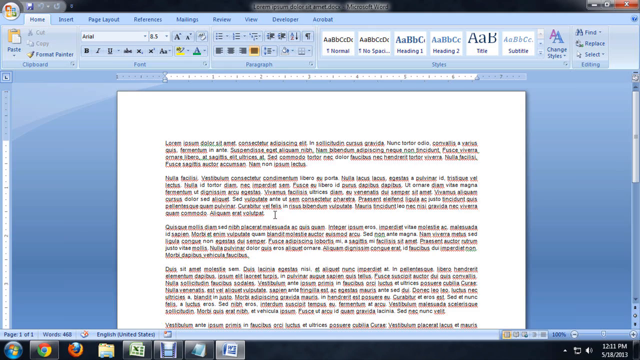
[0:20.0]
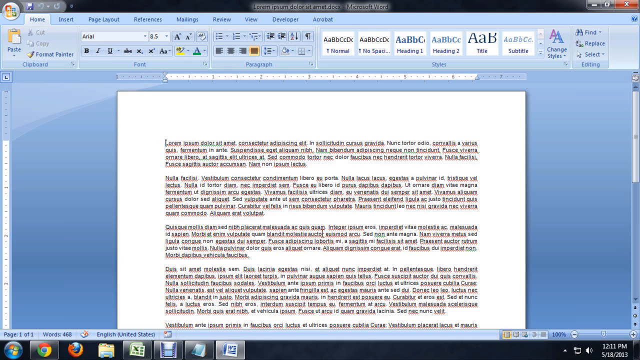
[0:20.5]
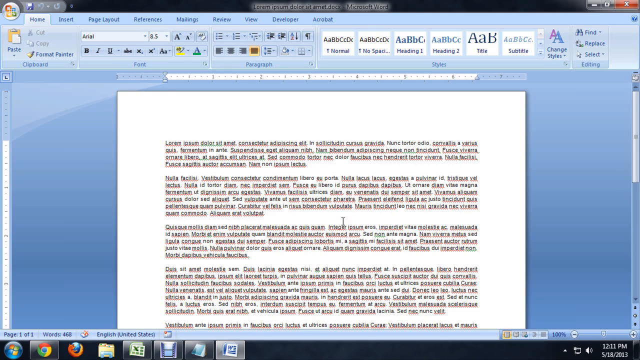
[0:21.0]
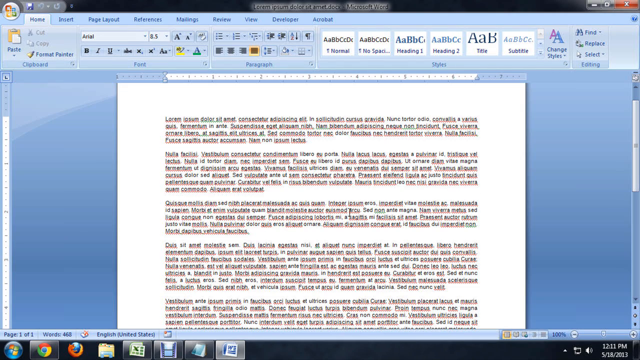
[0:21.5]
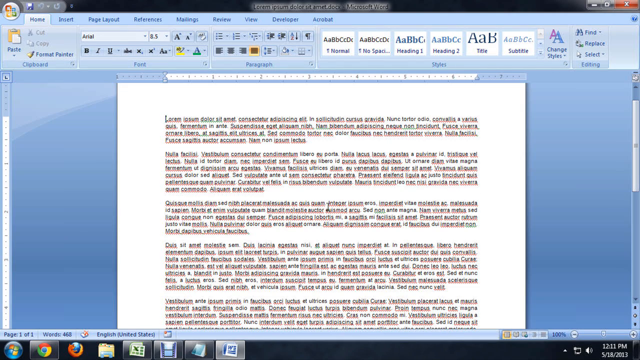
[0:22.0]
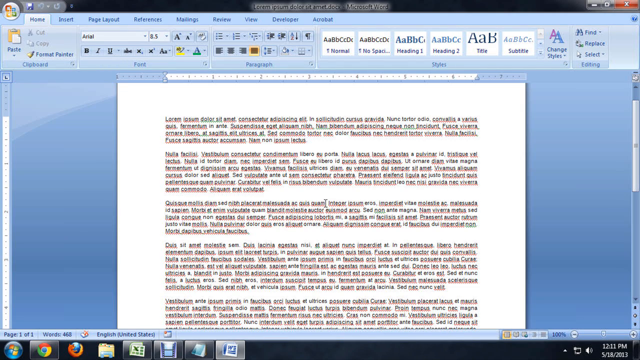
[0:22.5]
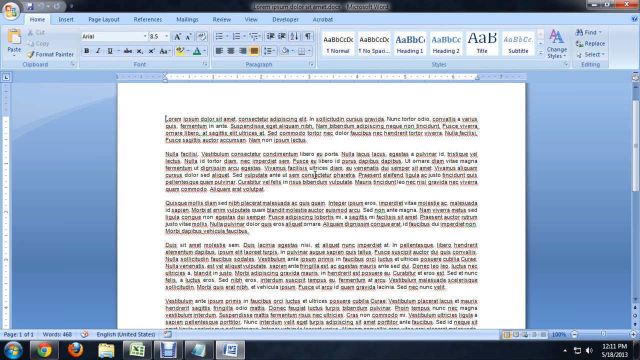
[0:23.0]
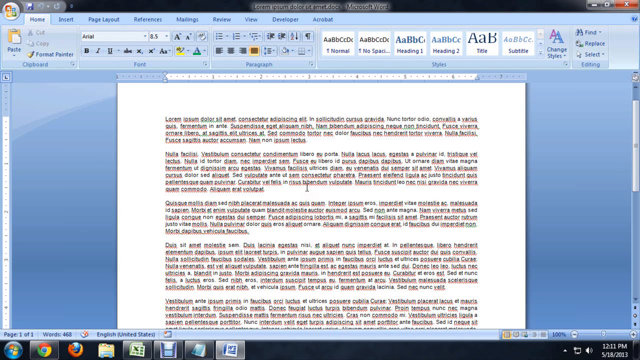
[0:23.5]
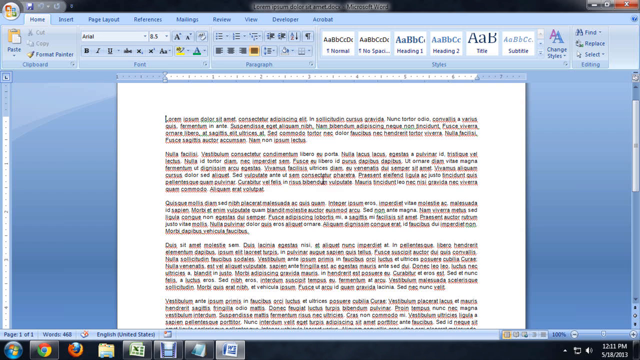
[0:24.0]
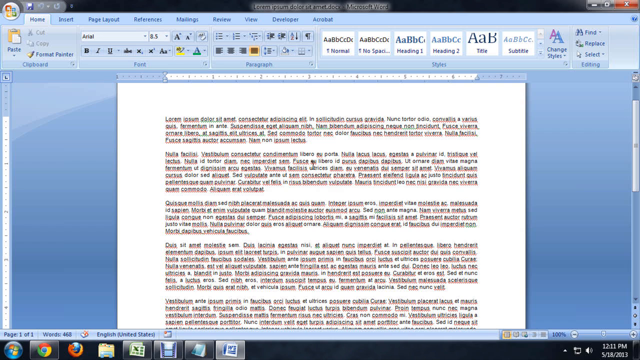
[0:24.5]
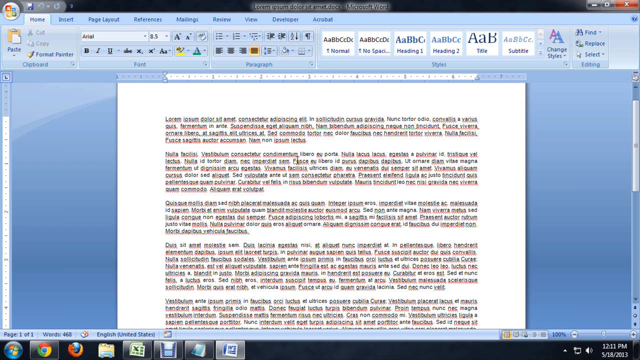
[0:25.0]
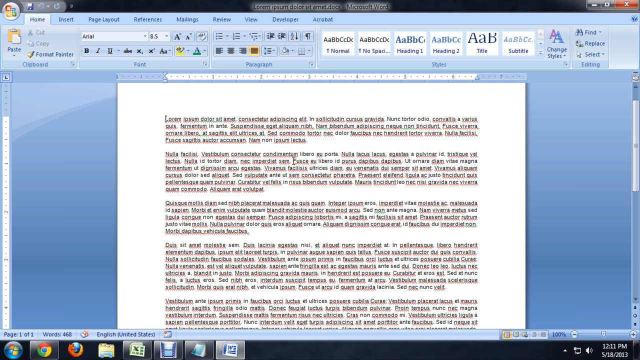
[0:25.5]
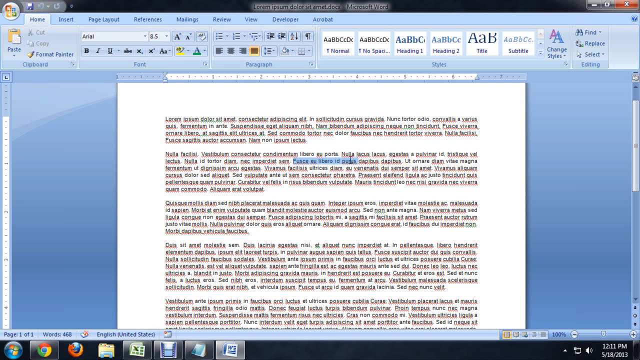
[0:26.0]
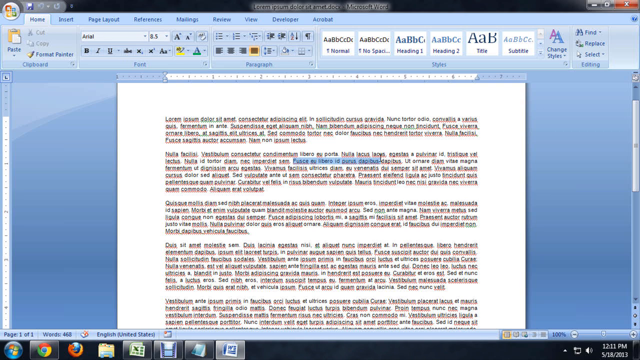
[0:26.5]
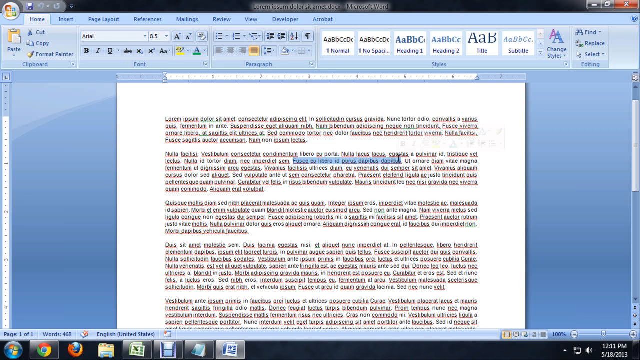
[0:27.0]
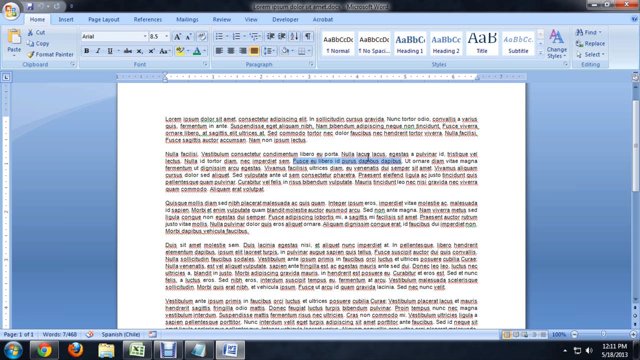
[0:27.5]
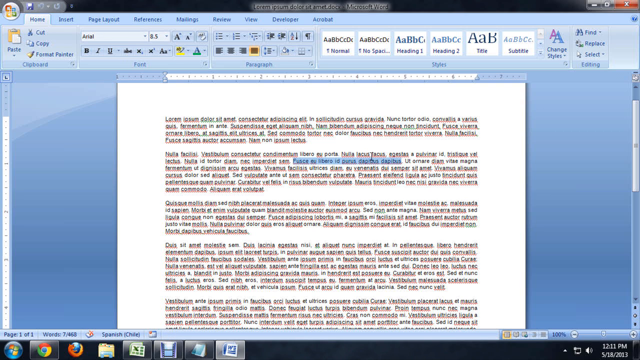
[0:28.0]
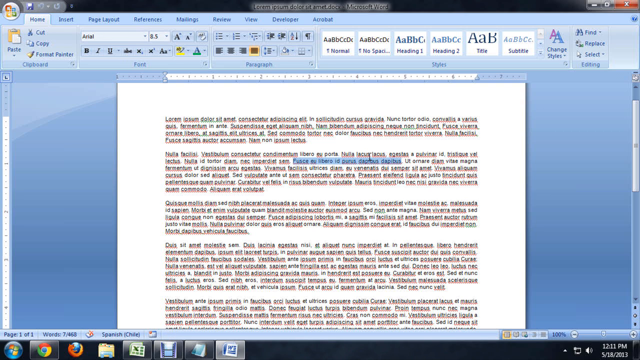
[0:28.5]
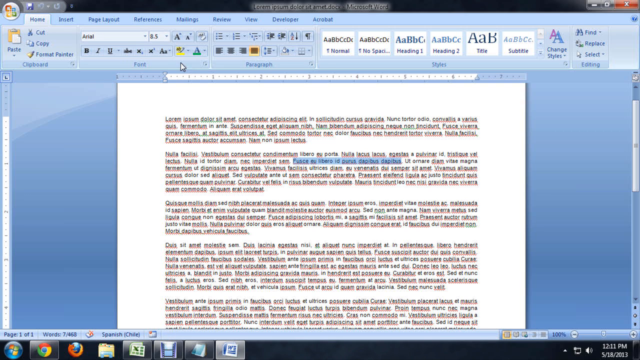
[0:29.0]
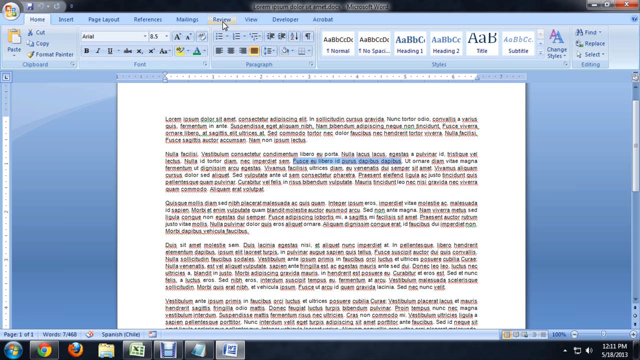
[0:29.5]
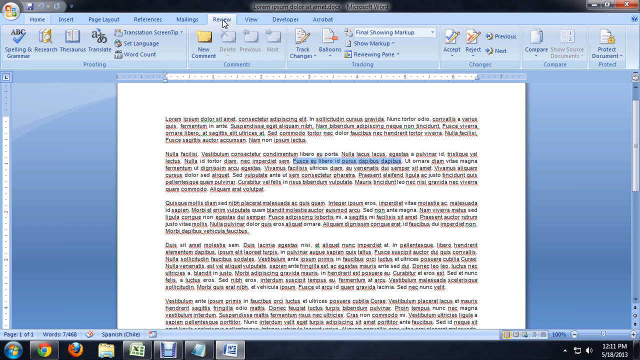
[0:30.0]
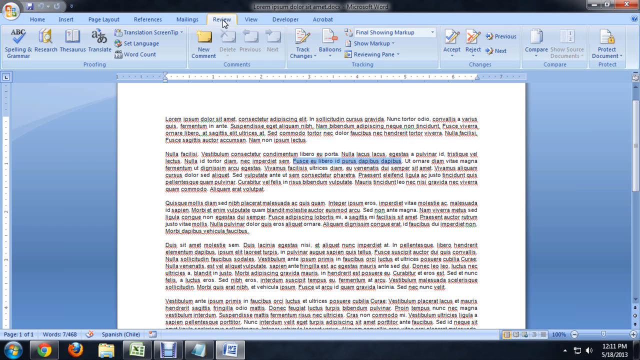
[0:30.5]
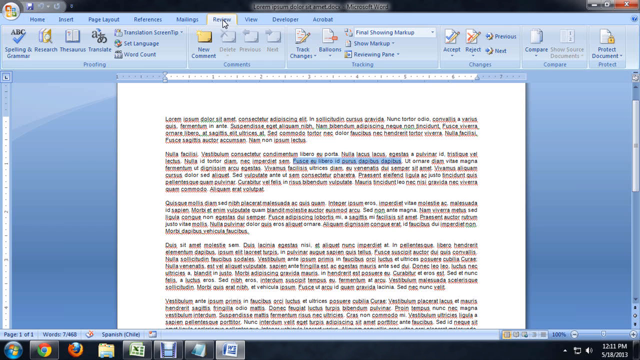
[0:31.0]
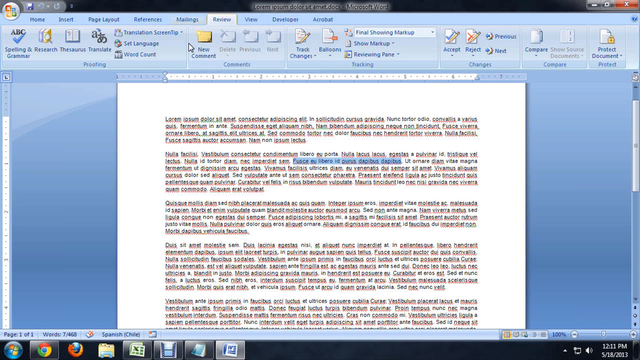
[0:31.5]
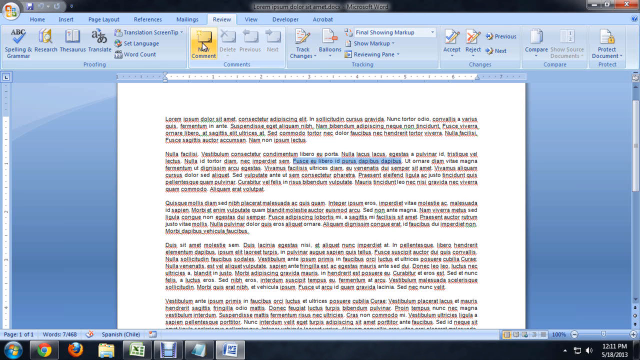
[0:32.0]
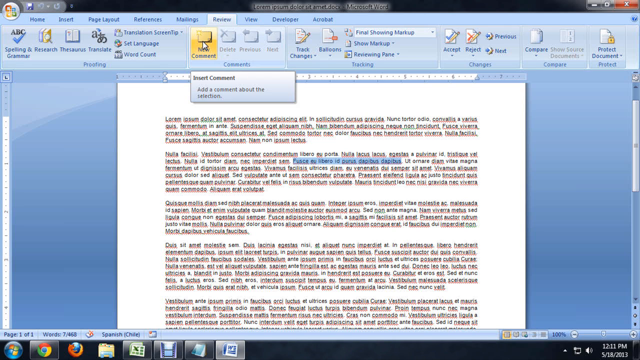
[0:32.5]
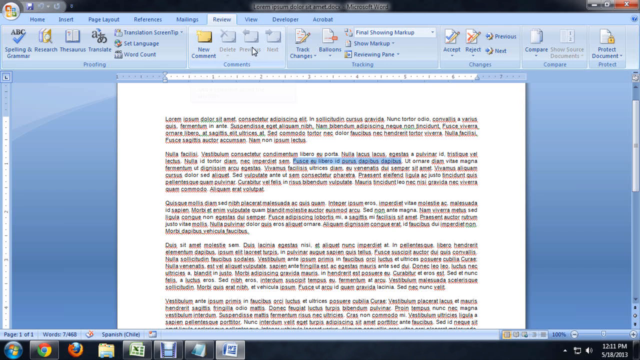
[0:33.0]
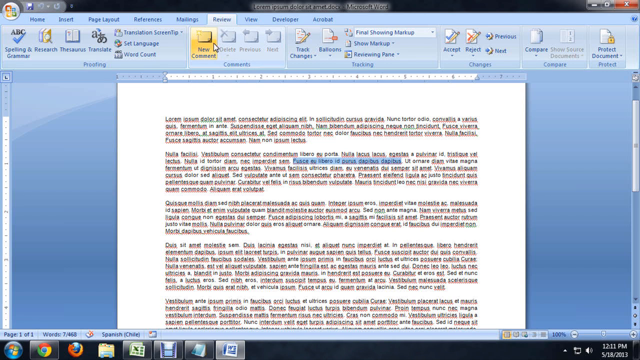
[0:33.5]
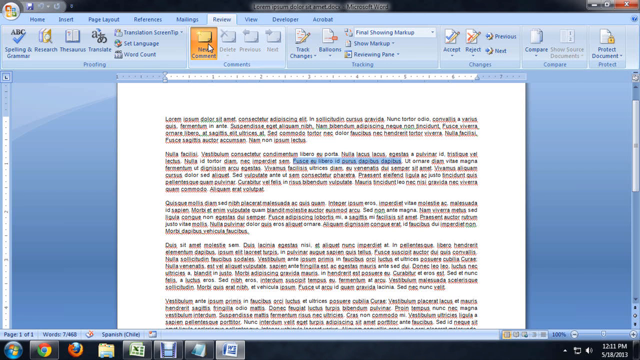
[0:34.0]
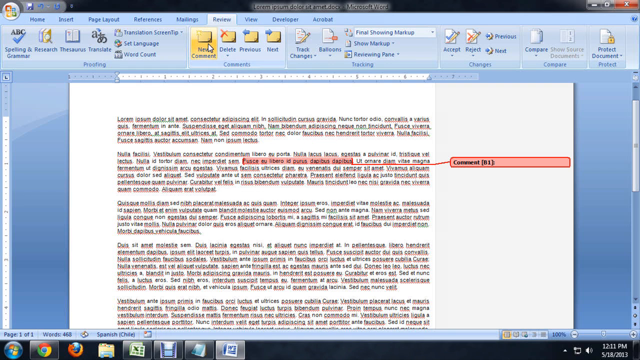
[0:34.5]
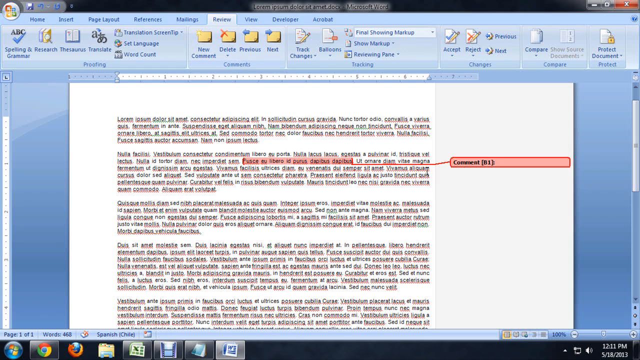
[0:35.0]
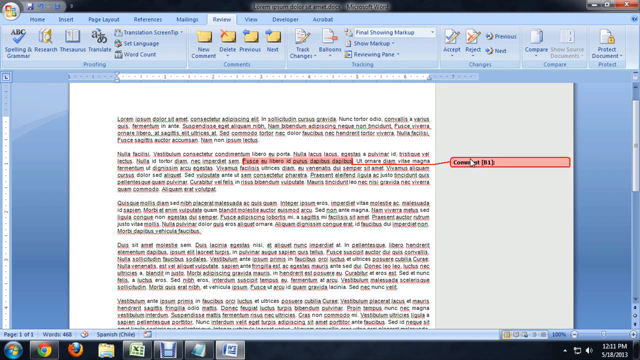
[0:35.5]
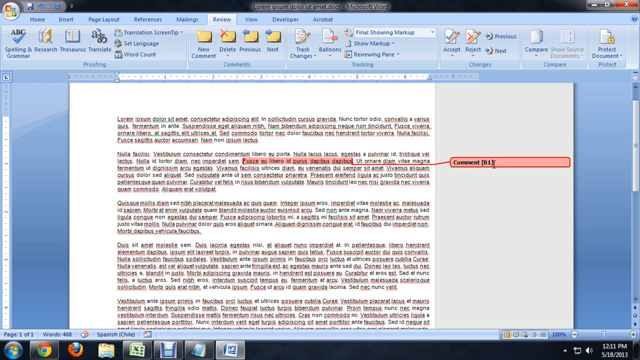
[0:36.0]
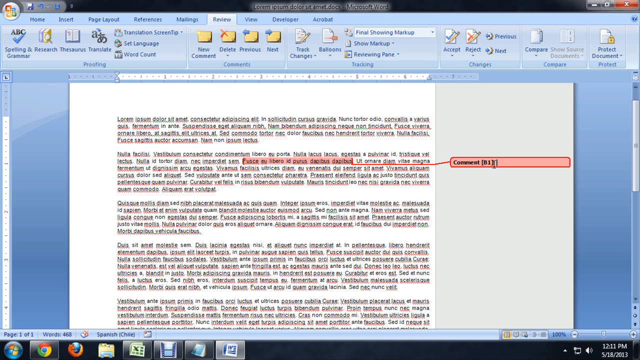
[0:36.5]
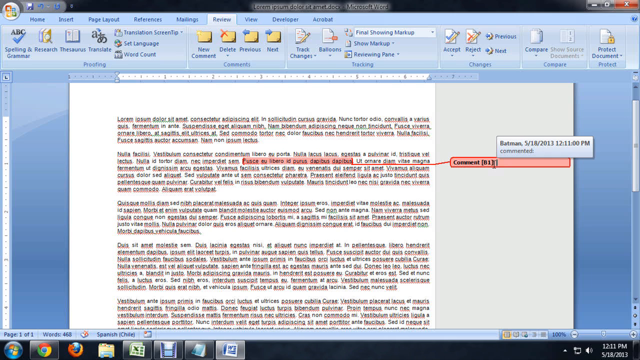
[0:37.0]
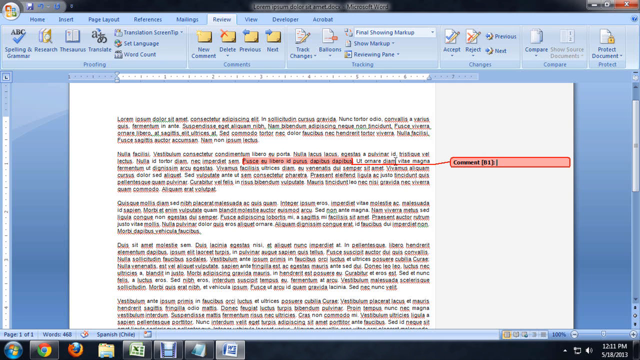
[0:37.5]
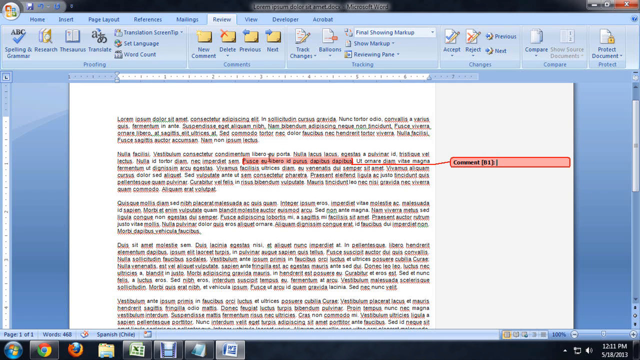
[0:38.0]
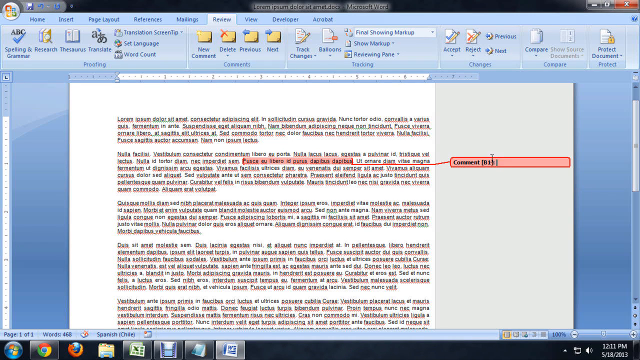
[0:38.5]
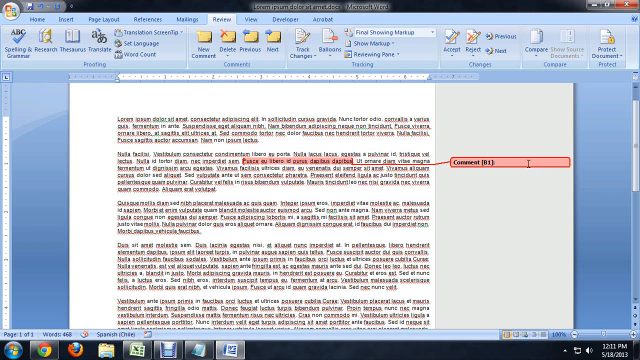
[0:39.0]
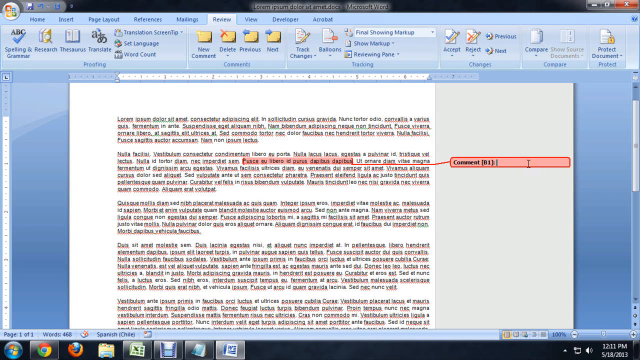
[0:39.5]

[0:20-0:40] The Microsoft Word document on the screen is filled with Lorem Ipsum gibberish text used as an example, in about six paragraphs. He highlights a sentence in the second paragraph, and it turns blue. He clicks on Review and then on a button called New Comment. The highlighted phrase turns red, and a rectangular comment bubble with a blinking cursor appears in the right panel, showing how a comment is added to a highlighted phrase and appears on the right side of the document. He works through the steps methodically. The camera does not zoom in or out and stays at the same distance.